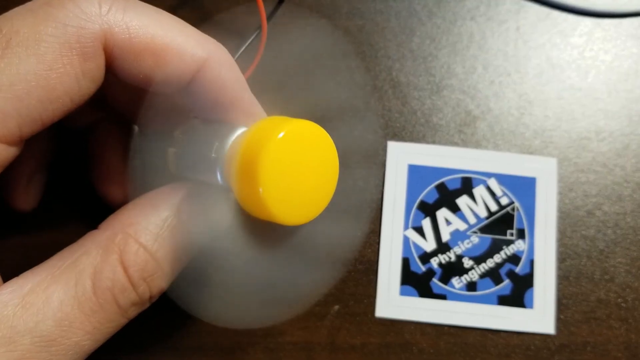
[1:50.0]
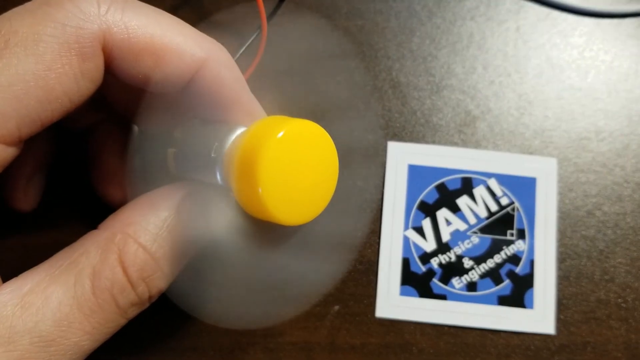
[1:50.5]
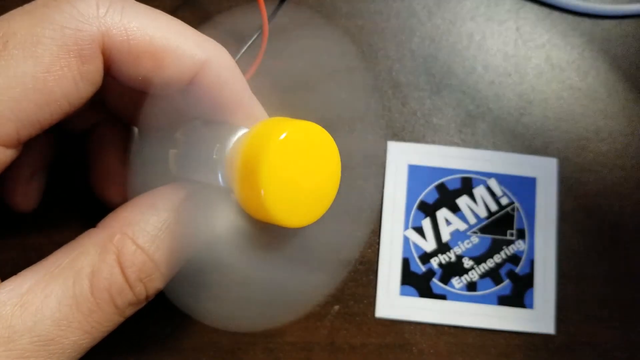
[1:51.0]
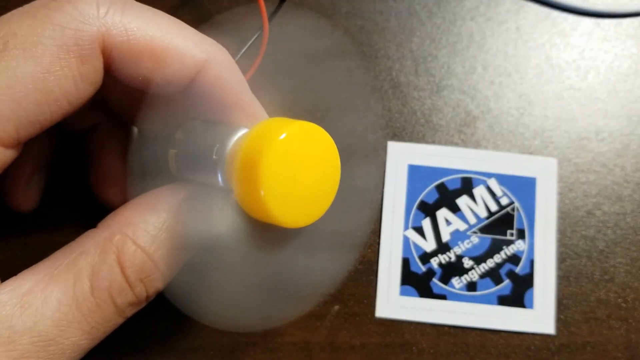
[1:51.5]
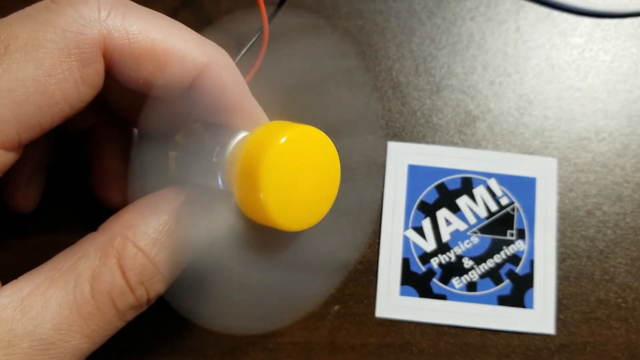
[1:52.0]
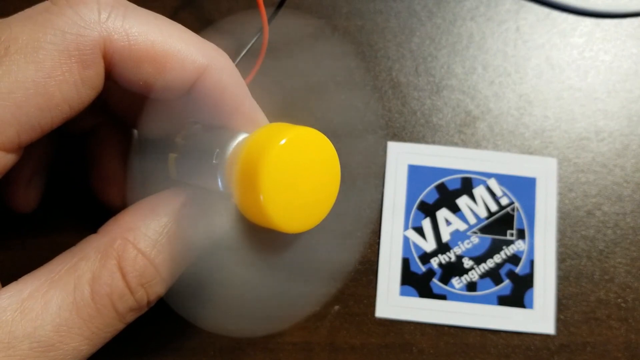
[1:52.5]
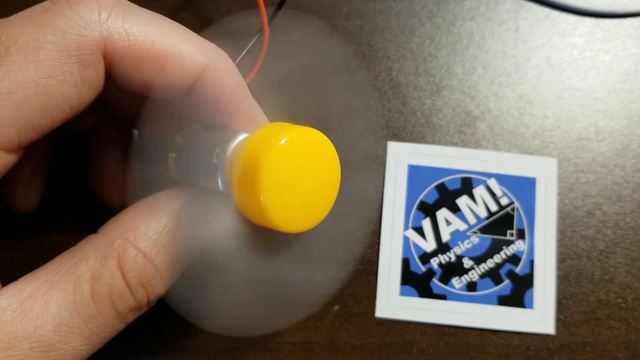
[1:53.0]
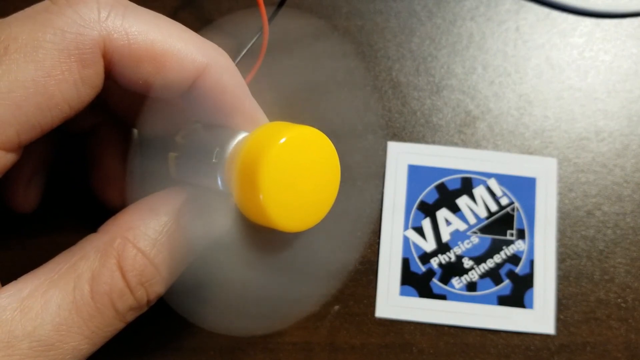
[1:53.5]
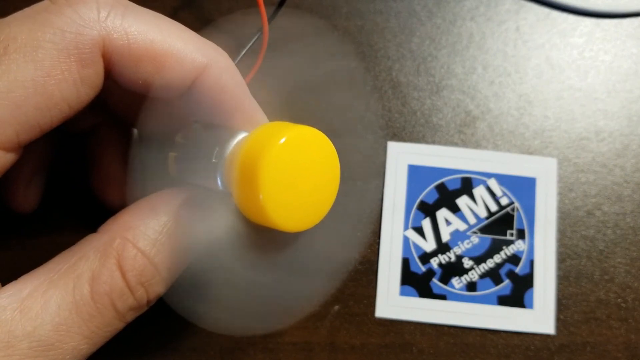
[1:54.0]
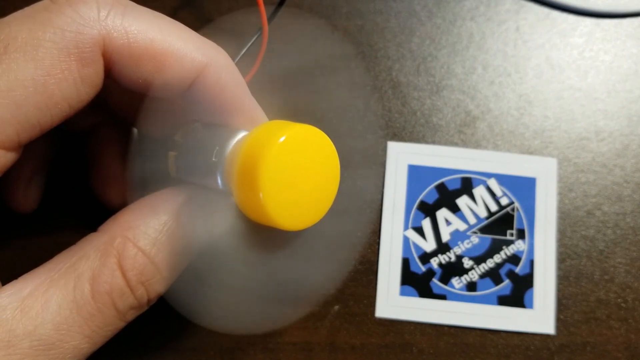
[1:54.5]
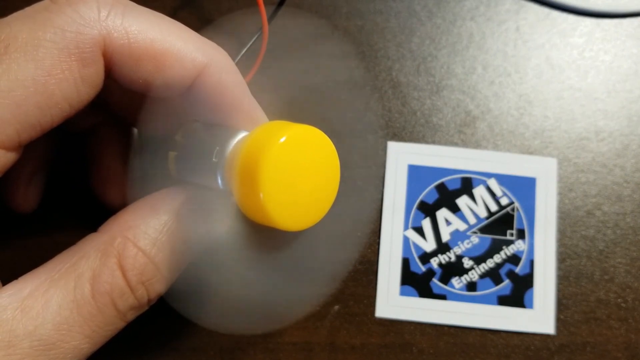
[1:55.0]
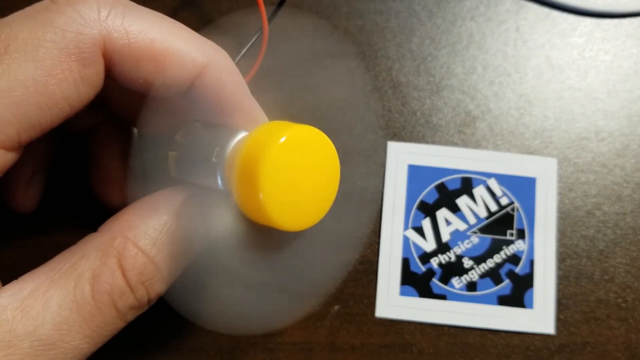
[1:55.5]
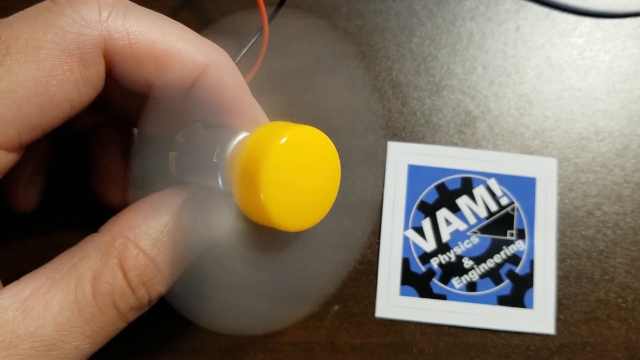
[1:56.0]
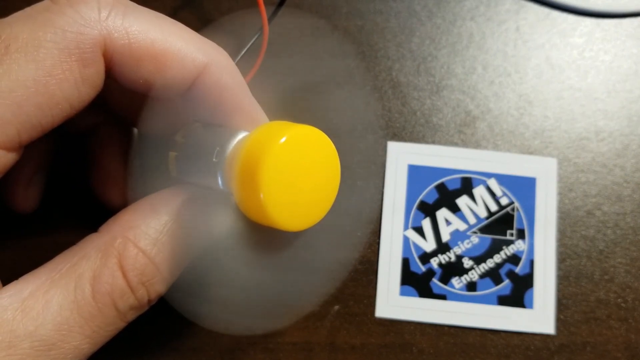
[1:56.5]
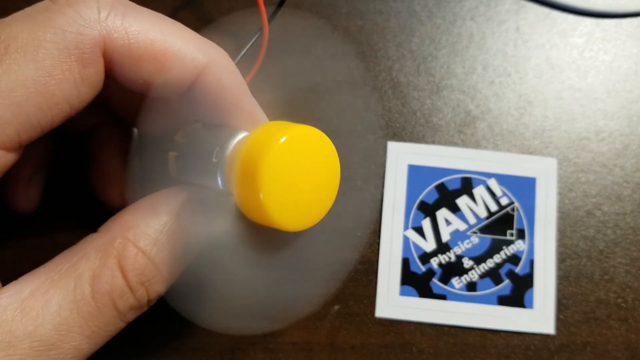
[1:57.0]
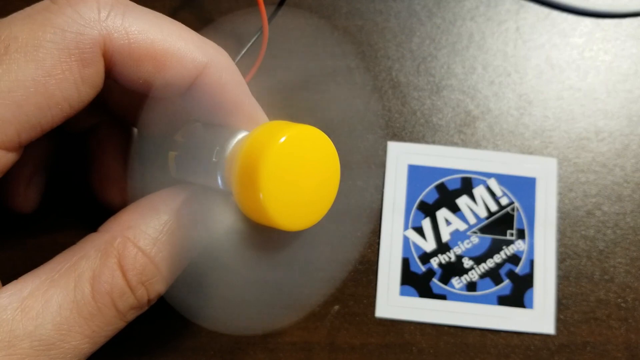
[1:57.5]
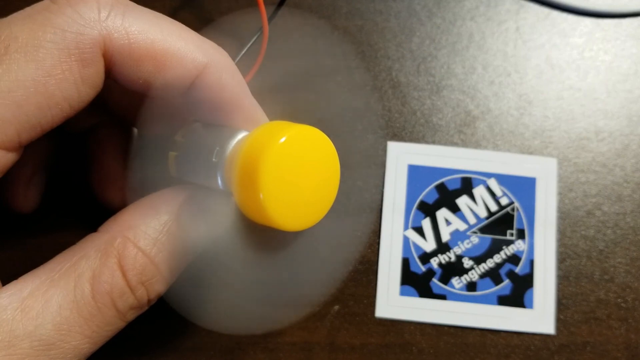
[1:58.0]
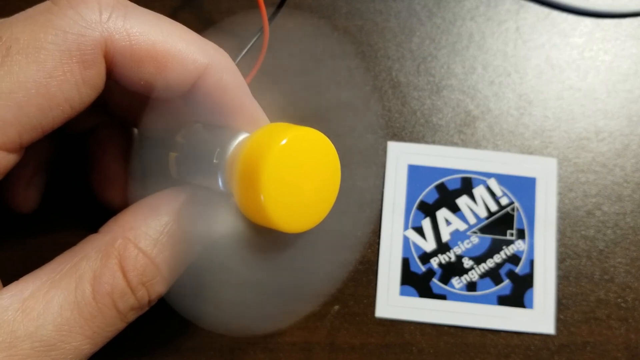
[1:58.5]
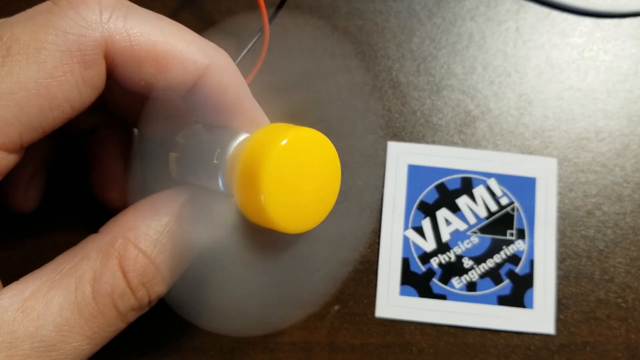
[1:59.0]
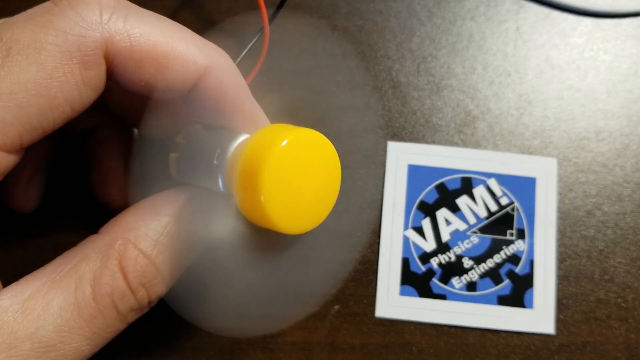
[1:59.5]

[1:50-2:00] The slide with graphs of different percentage values has text at the top that says "Hi everyone hope exams are going well... Looking to let democracy control the future topics on this channel. Vote for which topic you would like VAM to explore next. I will complete one video in that topic for each vote it receives. Poll will close 12-10-2020 (9am EST)." The video then shows a hand holding what appears to be a small fan, which seems to turn on and start spinning.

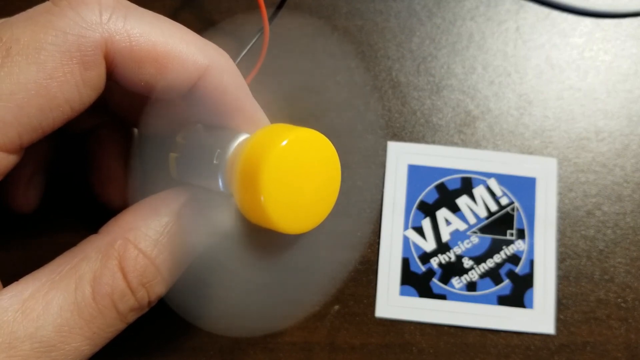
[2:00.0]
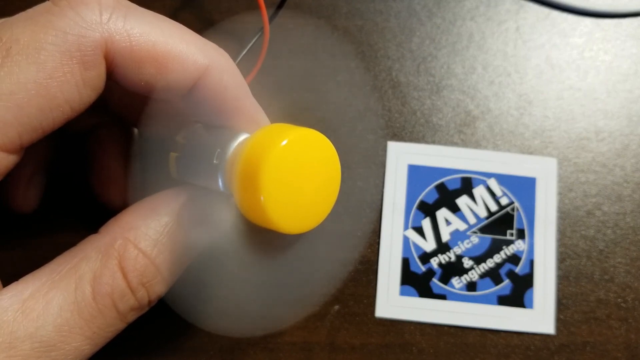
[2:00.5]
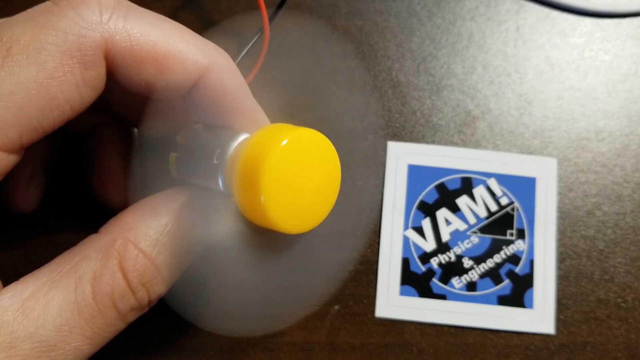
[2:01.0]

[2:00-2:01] The hand is still holding what appears to be a small fan connected to a red wire, which turns on and spins very fast. On the right is a small square sticker with the text "VAM!", a blue background and black gears in the center. It seems to be the logo of a video channel.